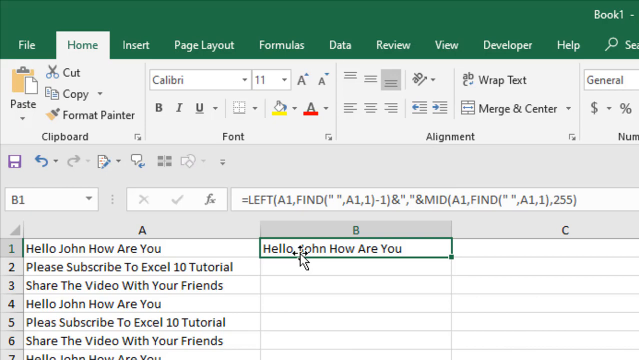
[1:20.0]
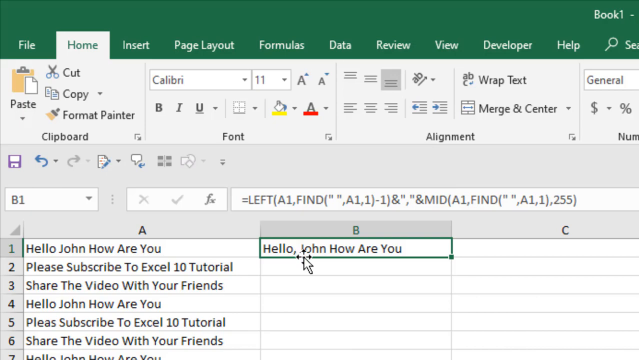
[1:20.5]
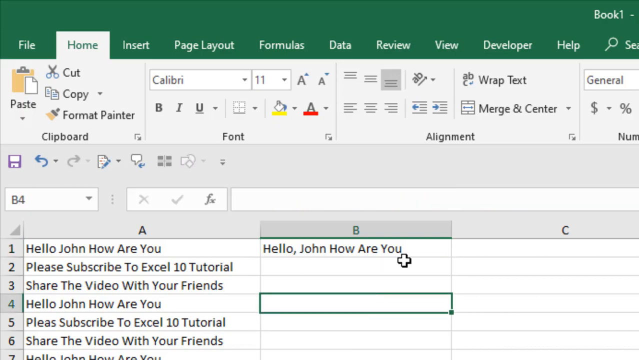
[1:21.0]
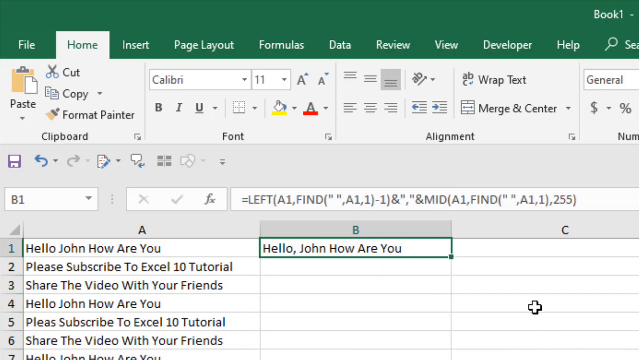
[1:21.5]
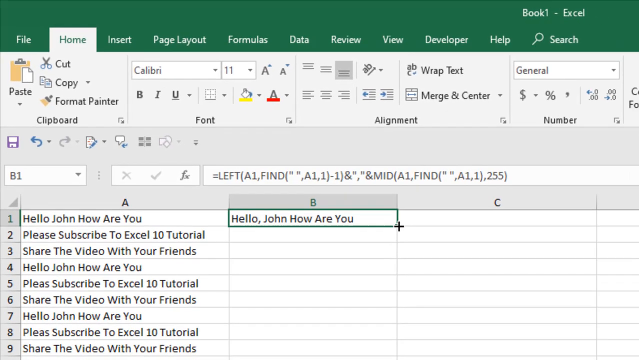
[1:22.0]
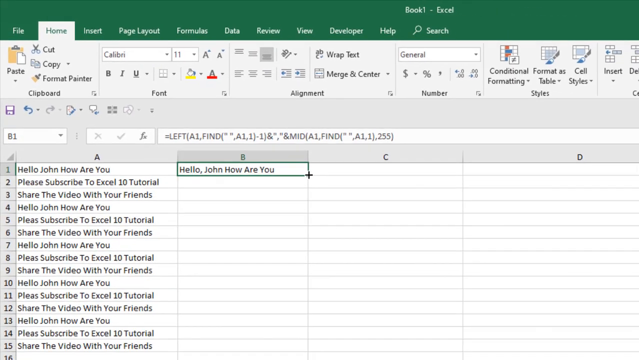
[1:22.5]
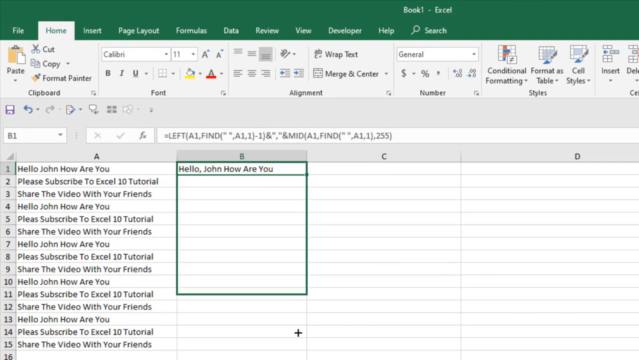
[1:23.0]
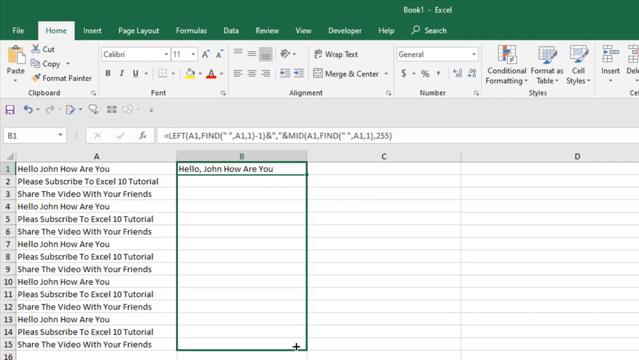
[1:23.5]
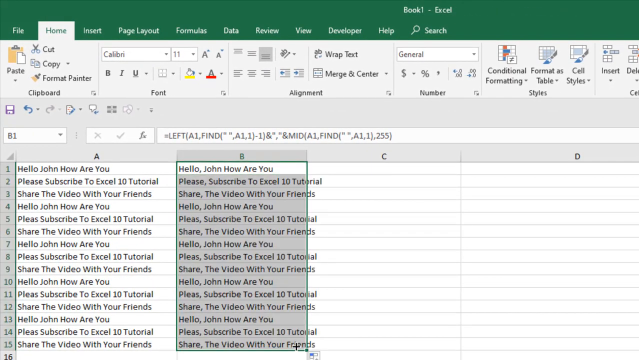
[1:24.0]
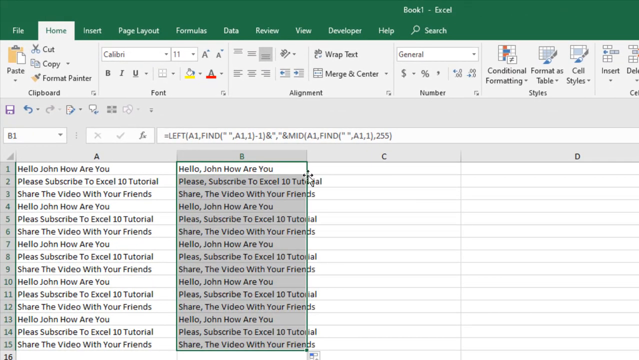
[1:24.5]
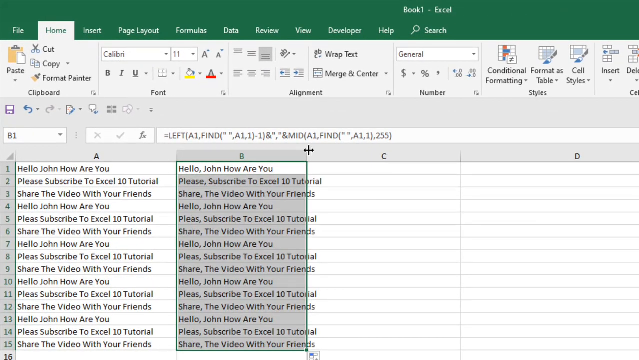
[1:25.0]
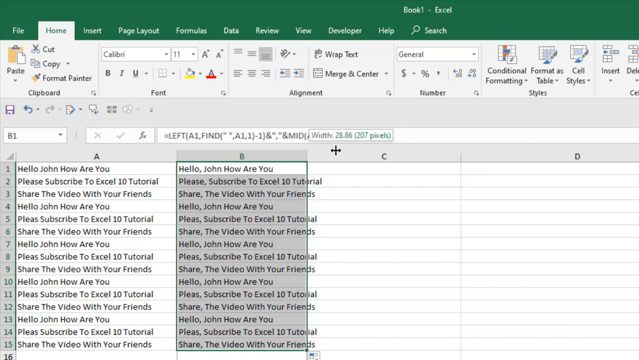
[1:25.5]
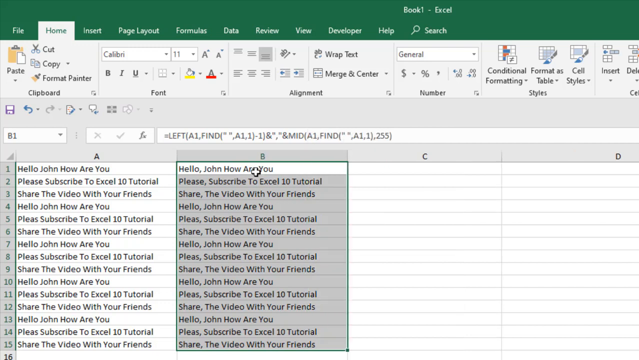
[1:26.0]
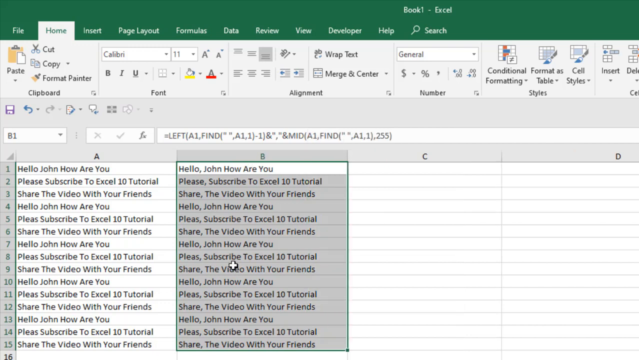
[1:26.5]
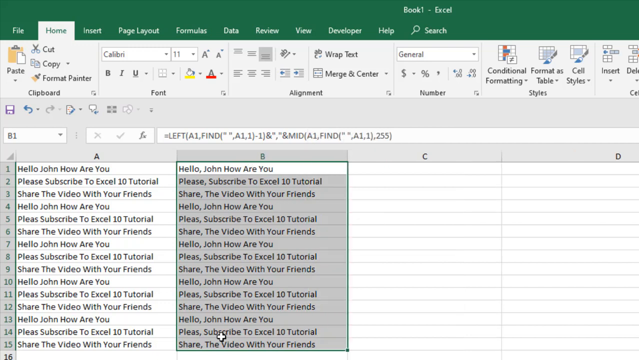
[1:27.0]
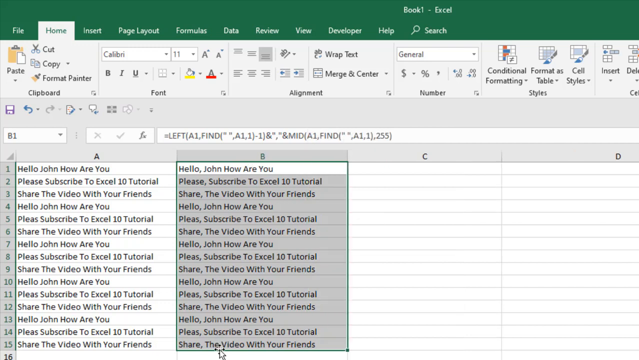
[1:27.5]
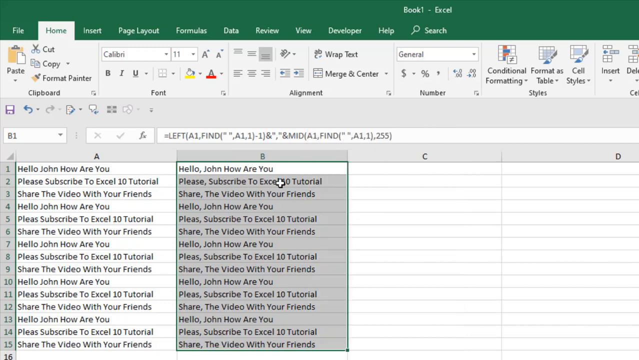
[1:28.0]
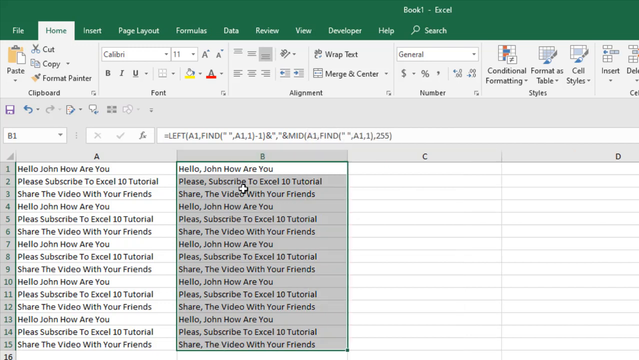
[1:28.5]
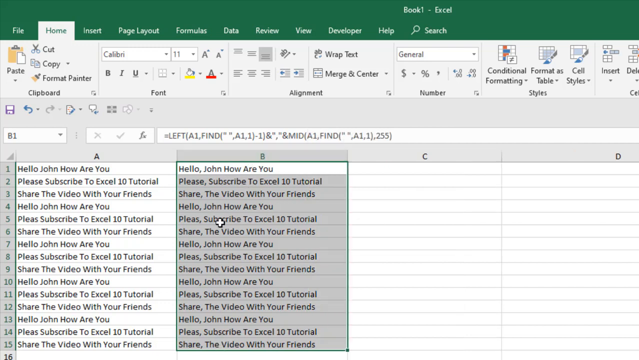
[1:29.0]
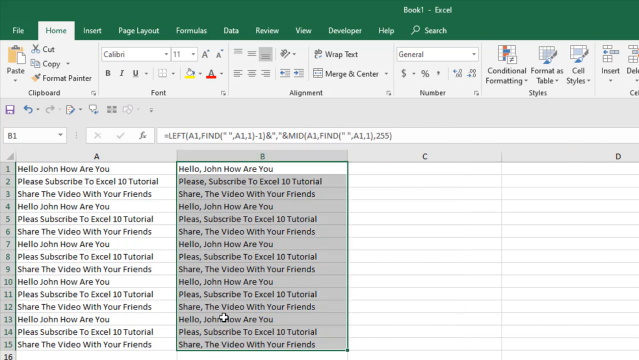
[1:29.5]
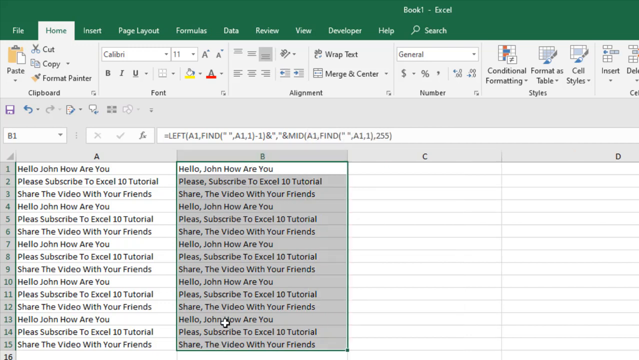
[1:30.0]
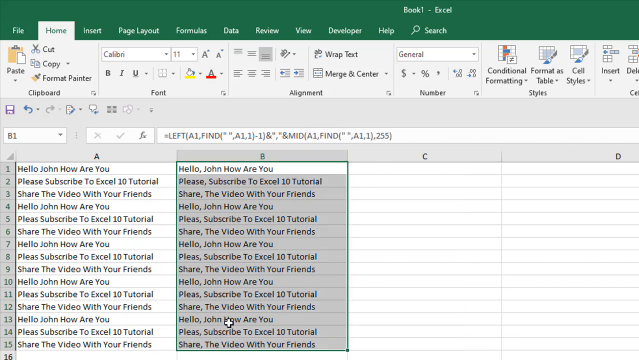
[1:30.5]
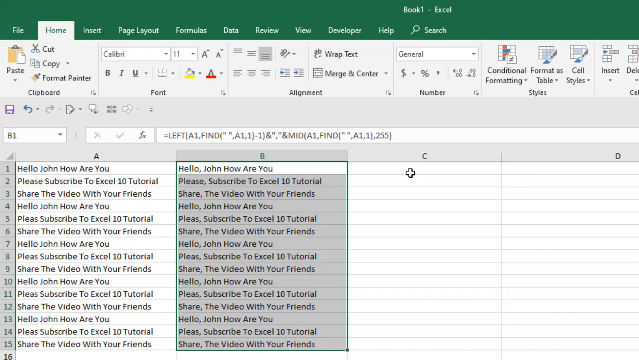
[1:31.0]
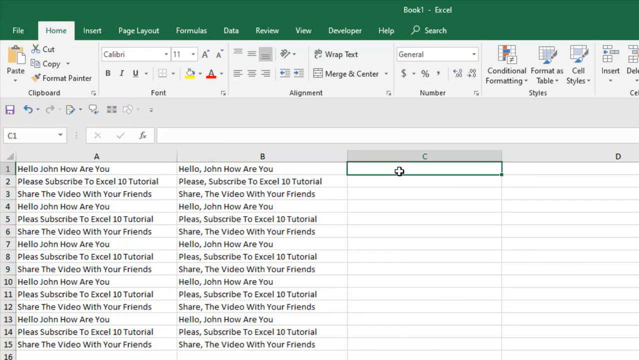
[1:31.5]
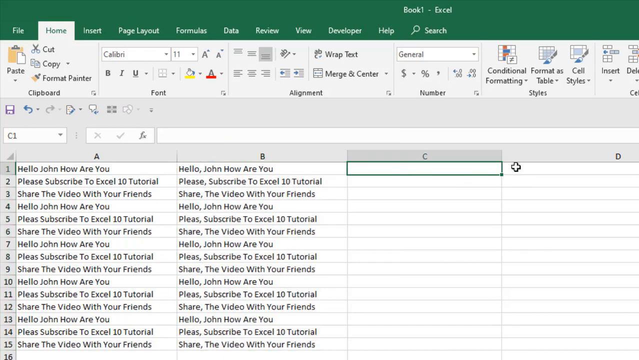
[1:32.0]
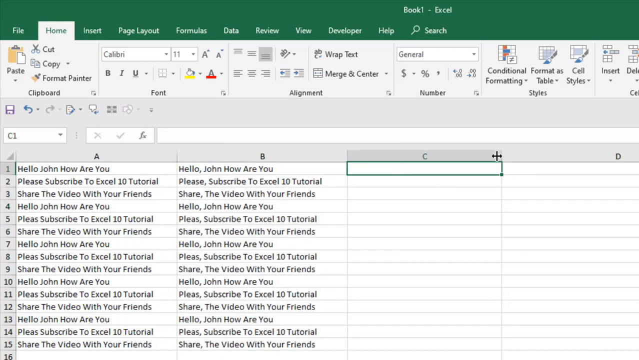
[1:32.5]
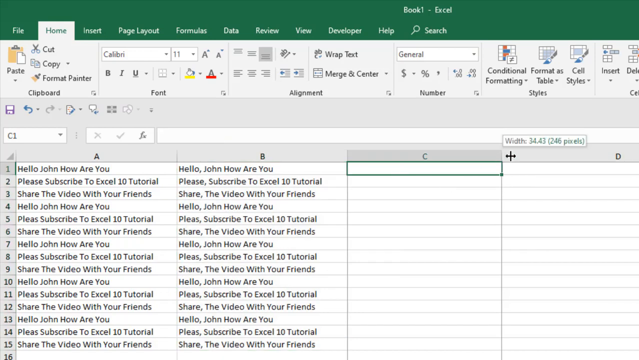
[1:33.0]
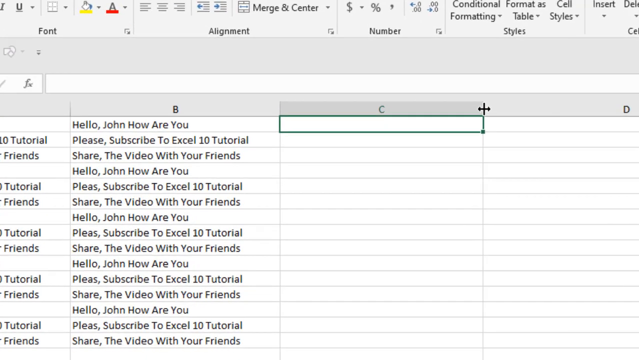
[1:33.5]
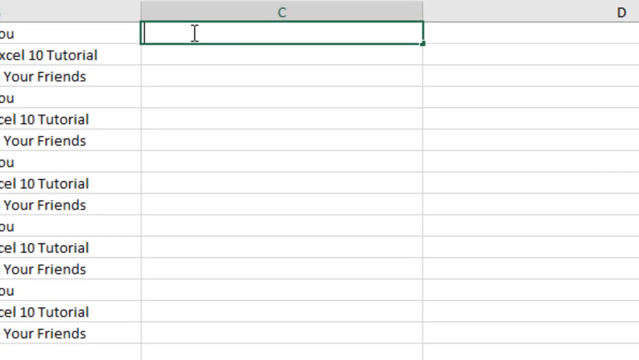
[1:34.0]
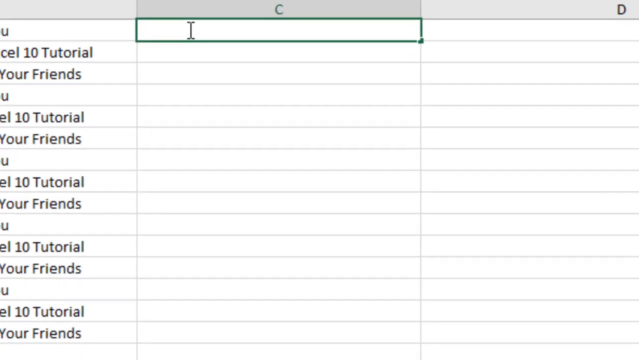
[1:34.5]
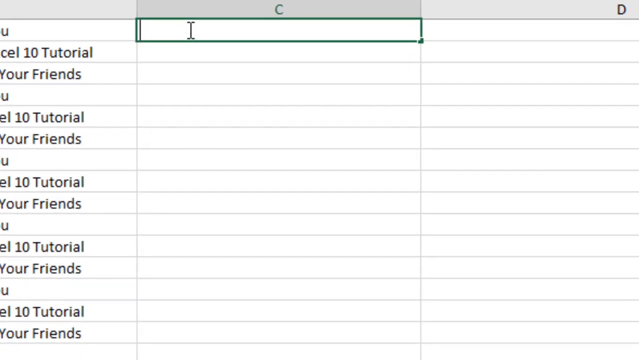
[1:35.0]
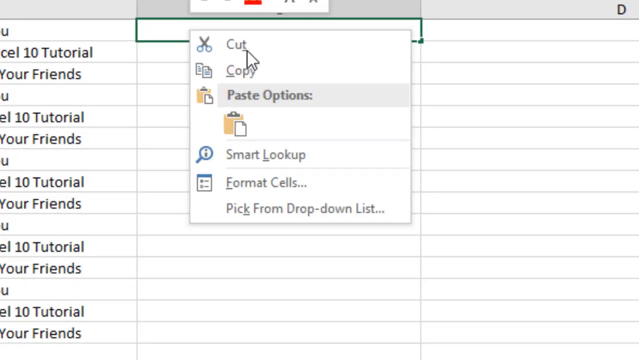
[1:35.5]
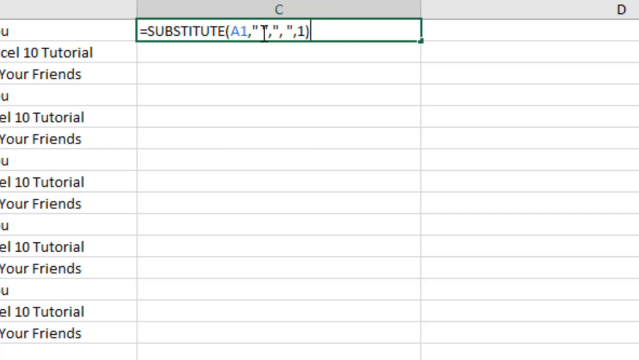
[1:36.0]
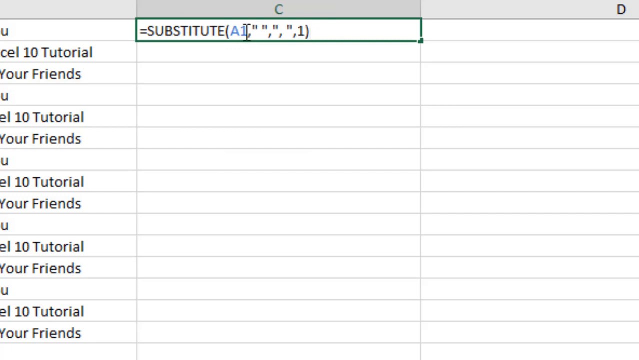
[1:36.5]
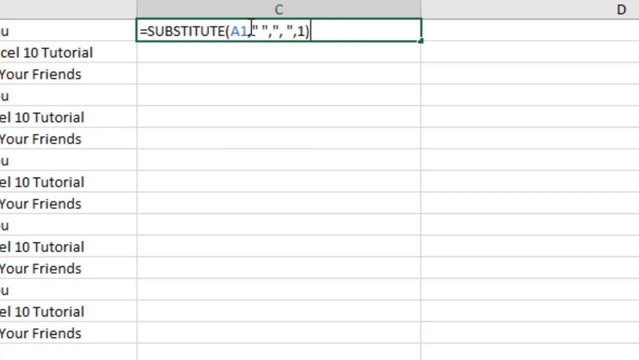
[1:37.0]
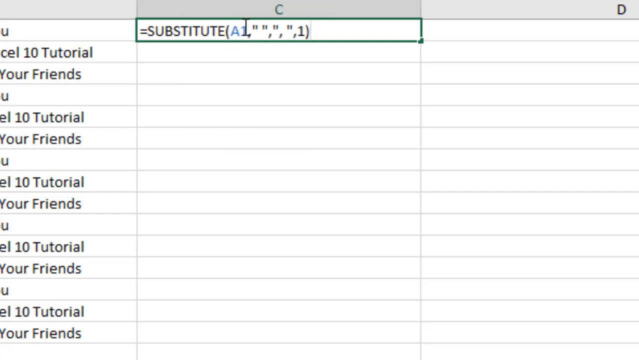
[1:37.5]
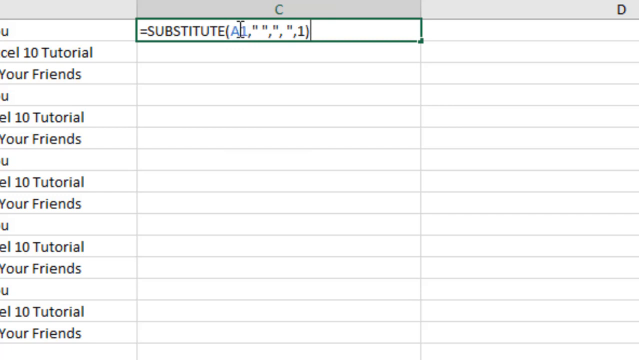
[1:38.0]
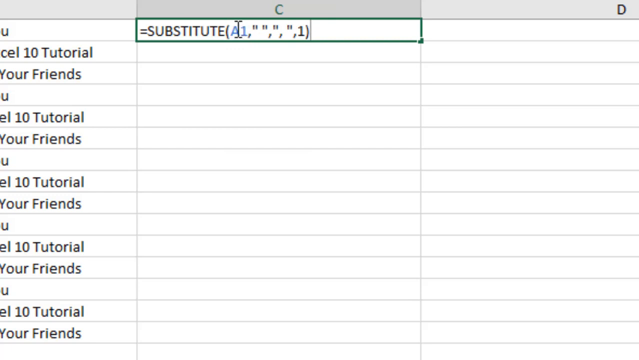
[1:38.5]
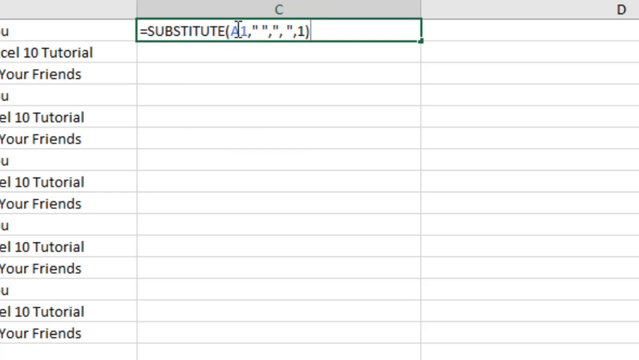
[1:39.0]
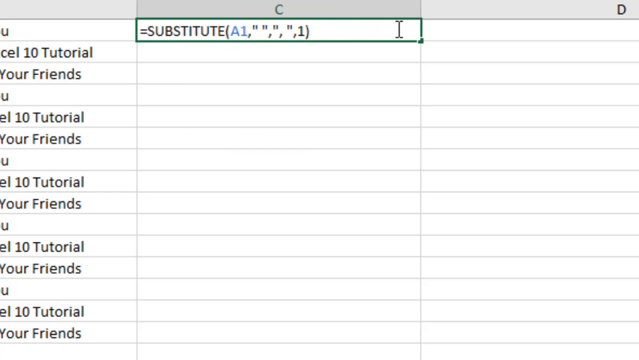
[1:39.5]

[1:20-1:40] The text in B1 is shown. The person then clicks and drags the cursor from A1 or B1 down to what looks like B17. It appears that everything in column A is copied into column B, with the only difference being that a comma is placed right after each starting word; some cells begin with "please", some with "hello", and some with "share", each followed by a comma in column B. The person then moves to column C and seems about to do the same thing there.